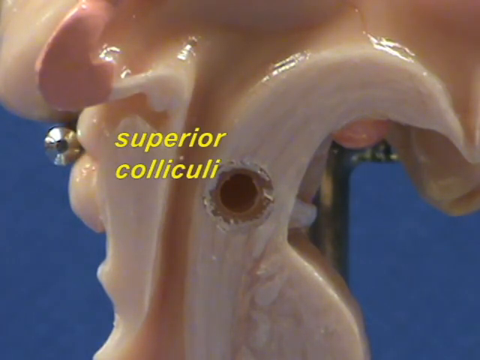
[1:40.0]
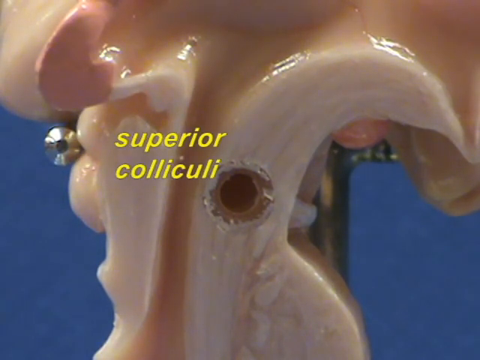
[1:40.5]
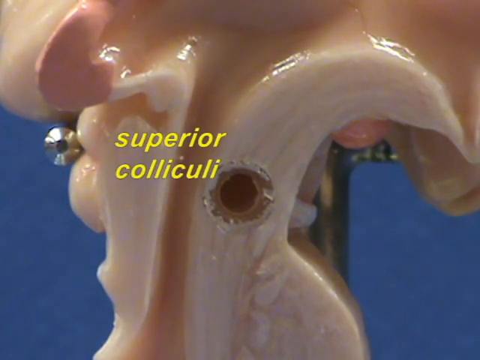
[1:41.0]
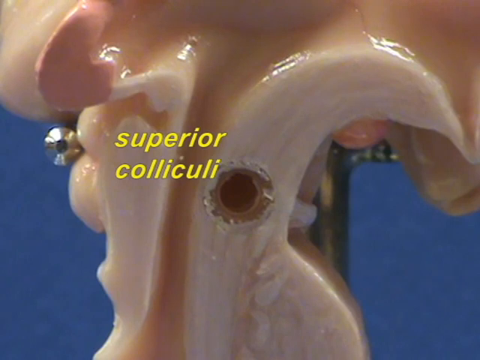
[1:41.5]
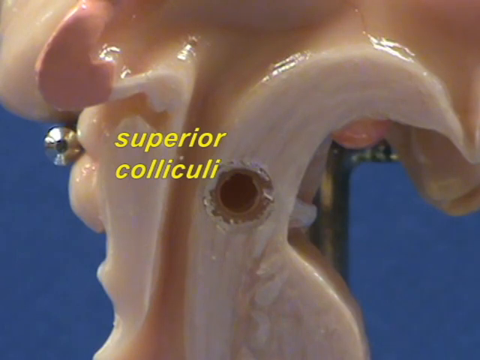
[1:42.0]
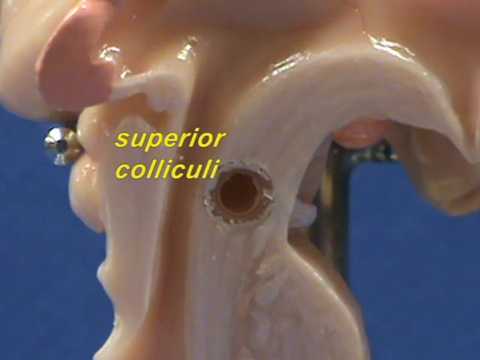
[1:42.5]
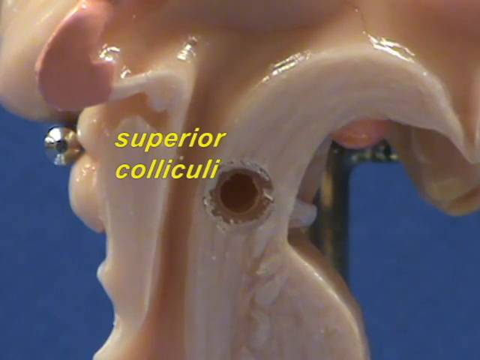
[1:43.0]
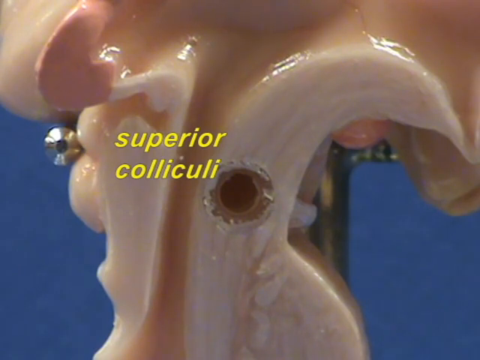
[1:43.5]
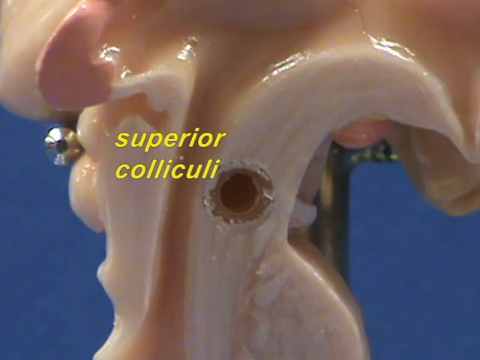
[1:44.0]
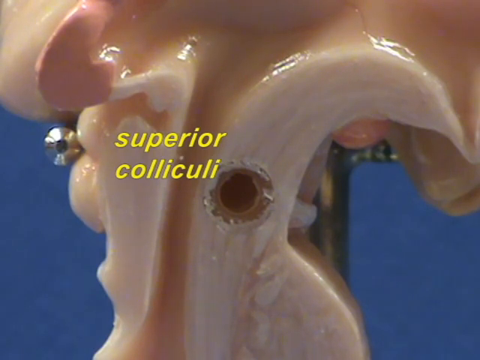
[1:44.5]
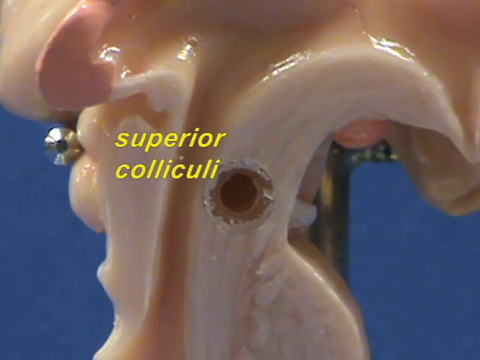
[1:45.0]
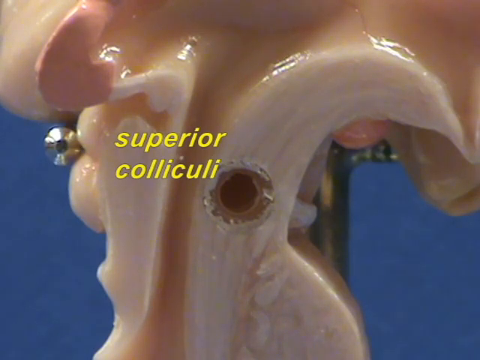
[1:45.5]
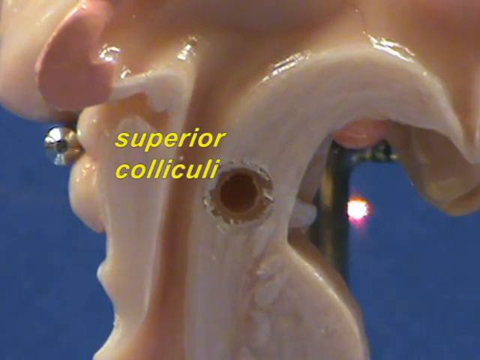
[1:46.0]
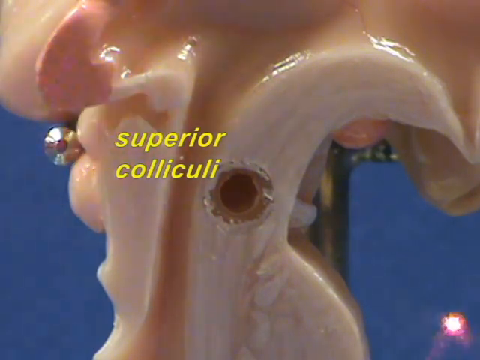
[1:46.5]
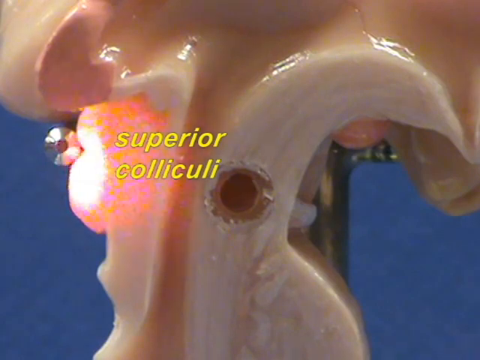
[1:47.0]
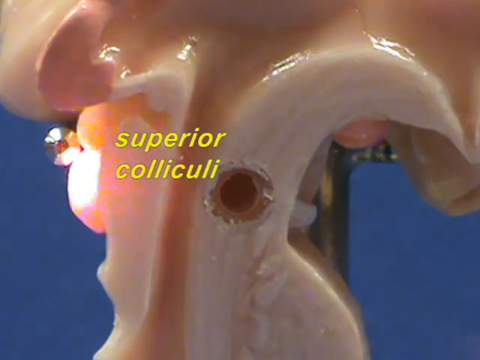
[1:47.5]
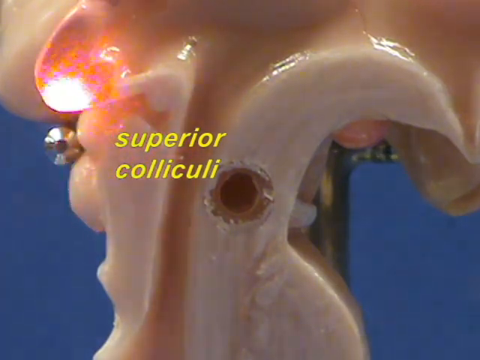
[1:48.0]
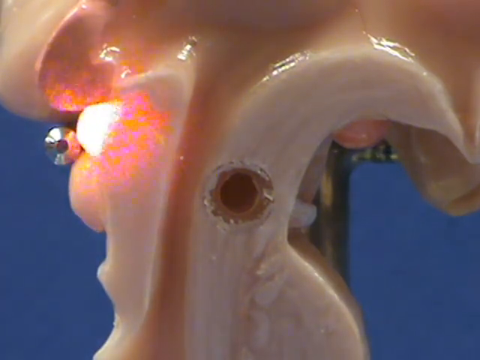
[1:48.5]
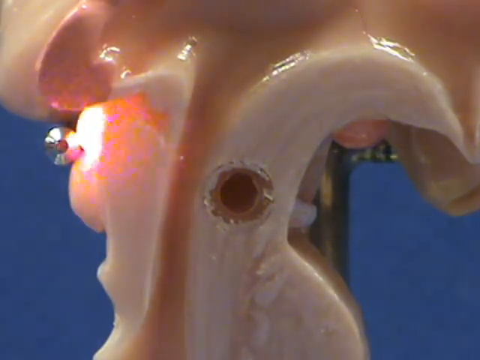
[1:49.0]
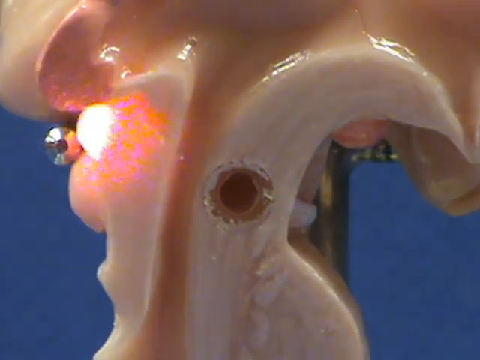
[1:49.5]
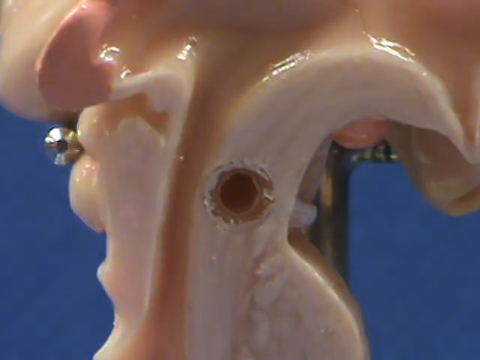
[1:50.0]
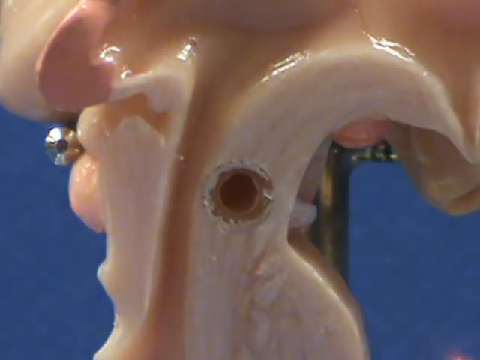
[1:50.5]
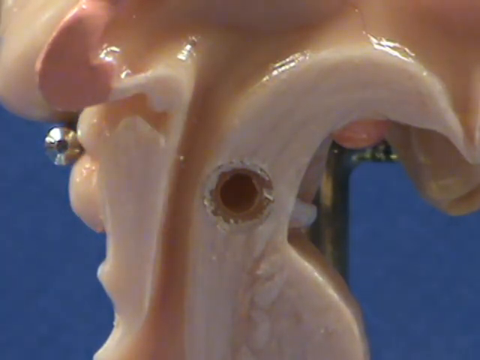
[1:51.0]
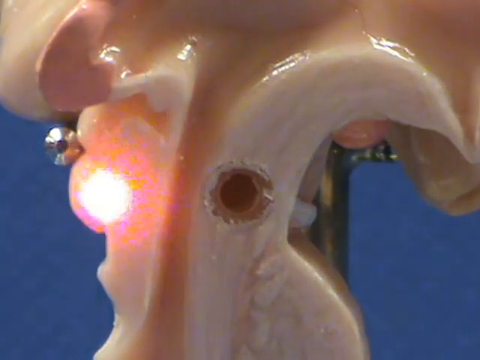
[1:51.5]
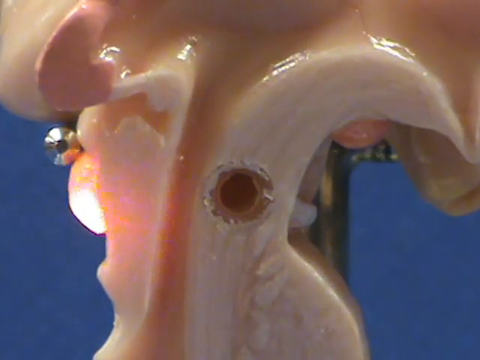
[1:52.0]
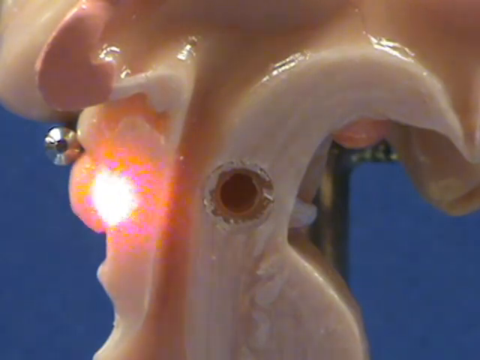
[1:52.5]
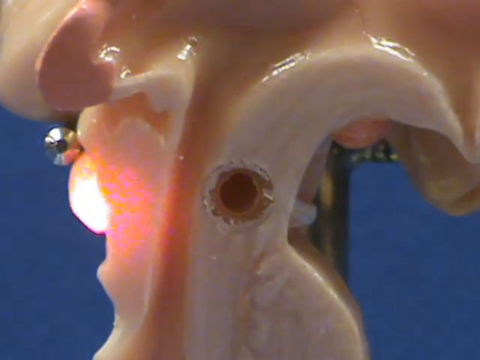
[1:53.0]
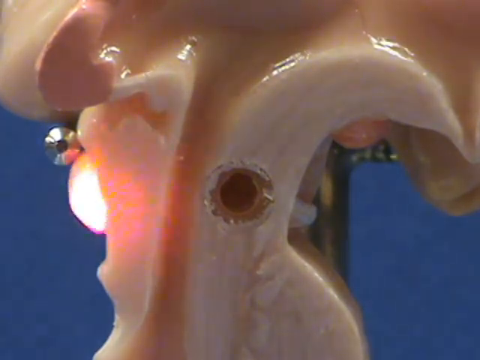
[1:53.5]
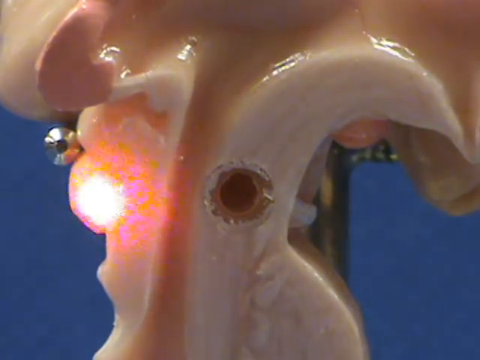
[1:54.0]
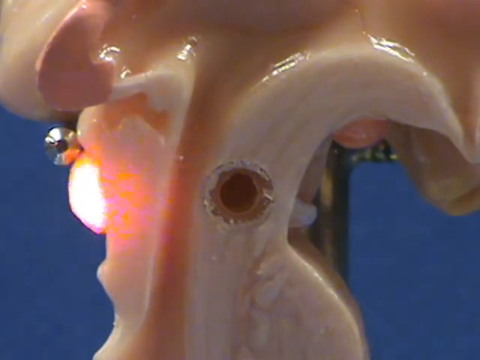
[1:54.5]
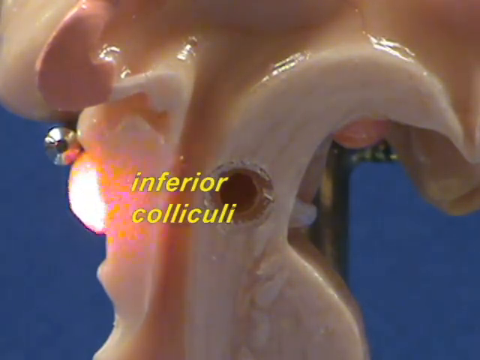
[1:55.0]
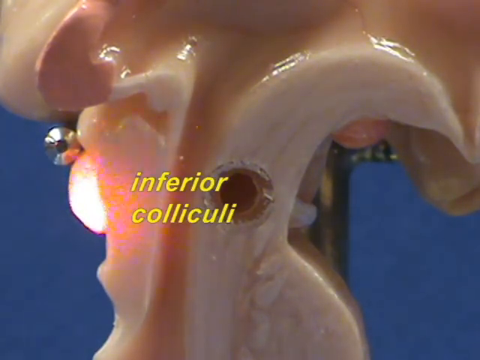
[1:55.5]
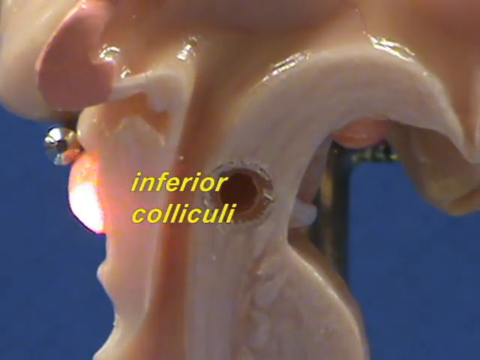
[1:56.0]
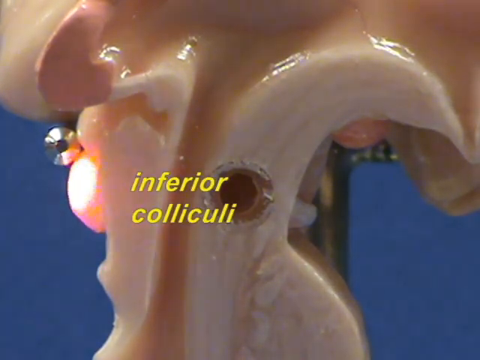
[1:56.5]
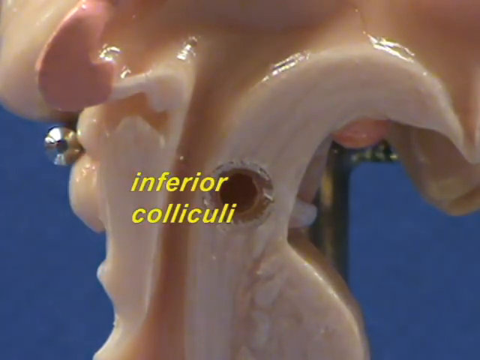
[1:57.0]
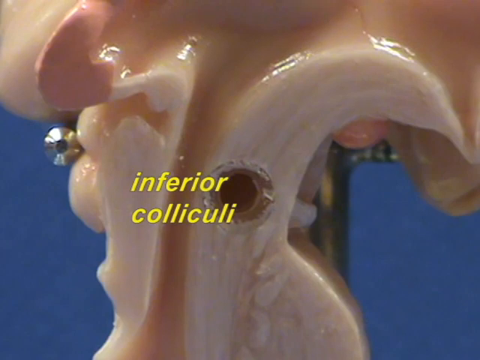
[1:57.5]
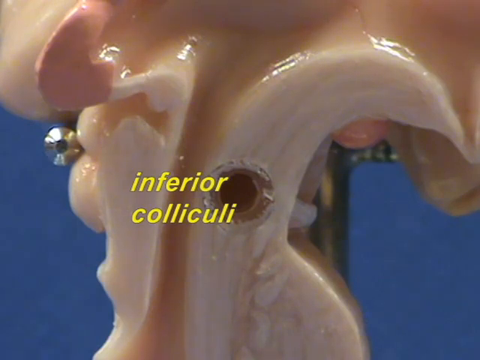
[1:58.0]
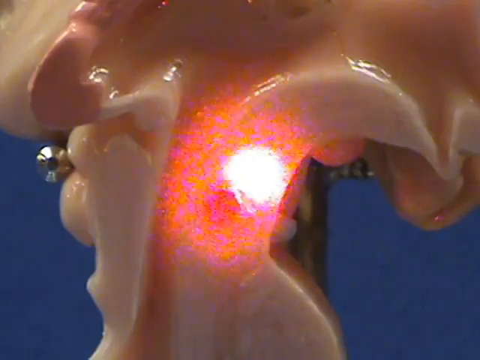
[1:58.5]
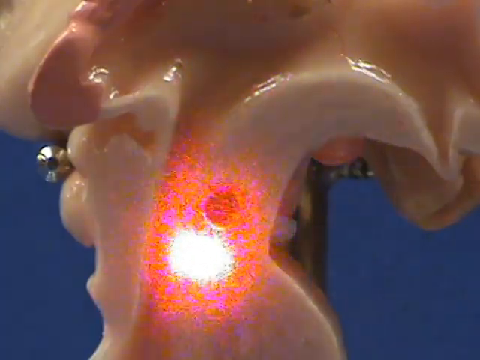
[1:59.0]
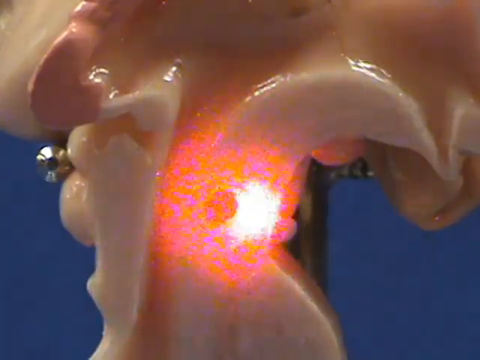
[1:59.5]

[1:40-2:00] The teaching model of a part of the human body is shown with yellow text in the middle of the object reading "superior colliculi". The light is not in use at first; after a few seconds it appears and the yellow text goes away. There appears to be a bulbous part on the outside of the object. The words "inferior colliculi" then pop up on the screen. Then all the labels go away, and the light shows a hole cut into the object that does not look like part of the body but like something from how it was made. The light circles around the hole and then goes away.